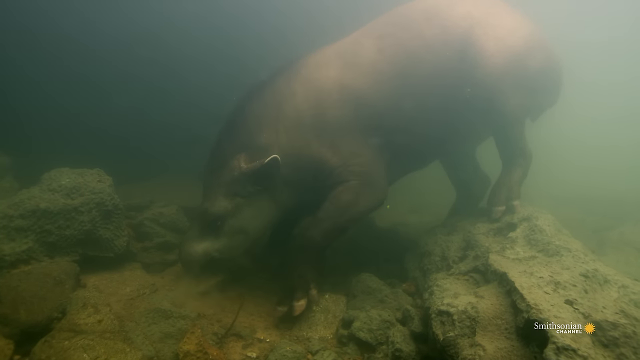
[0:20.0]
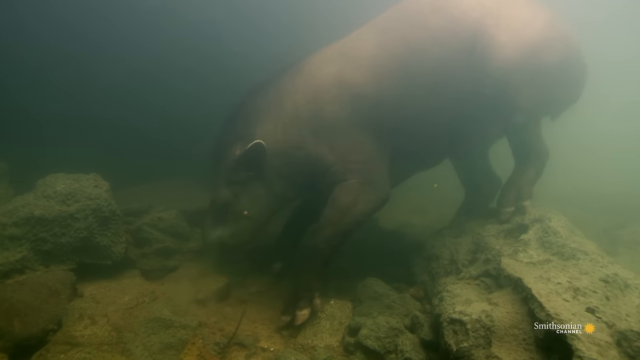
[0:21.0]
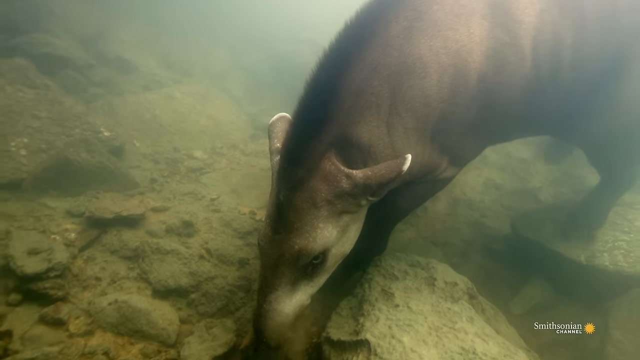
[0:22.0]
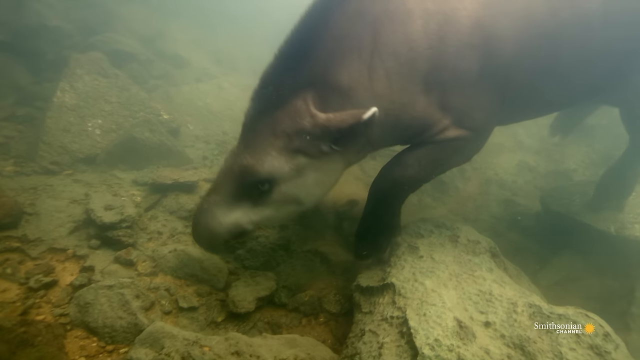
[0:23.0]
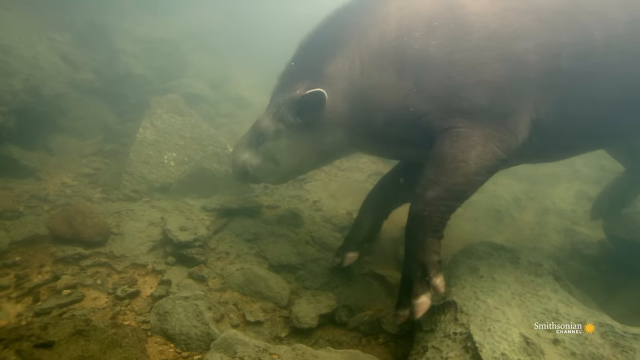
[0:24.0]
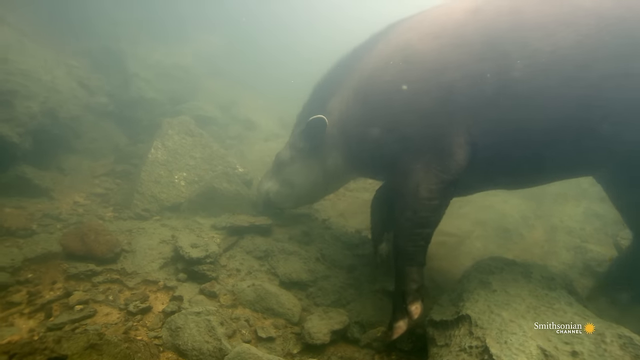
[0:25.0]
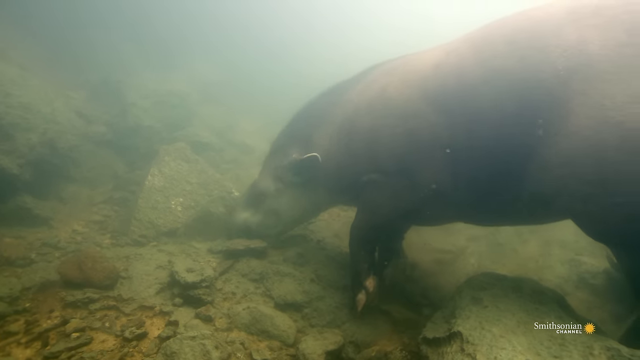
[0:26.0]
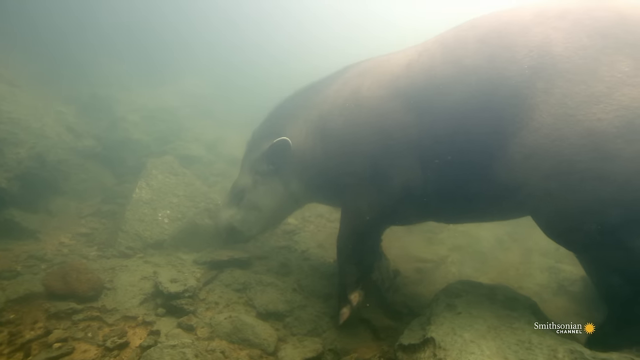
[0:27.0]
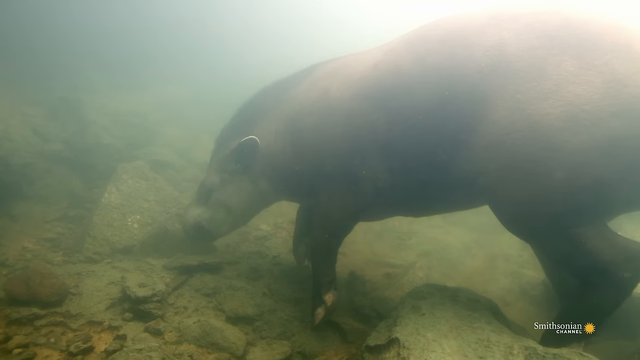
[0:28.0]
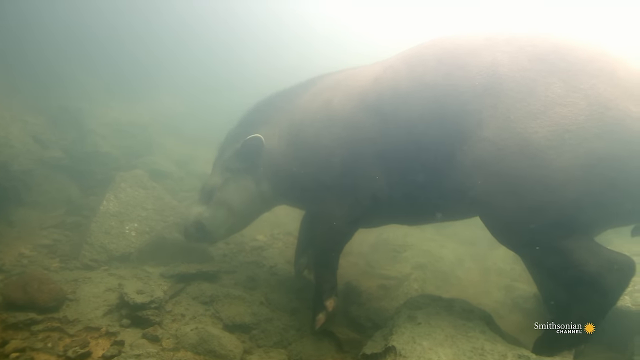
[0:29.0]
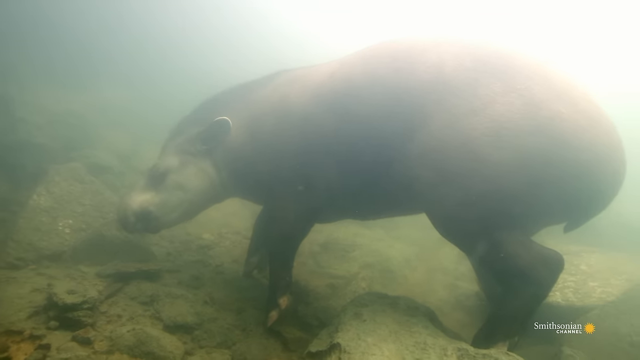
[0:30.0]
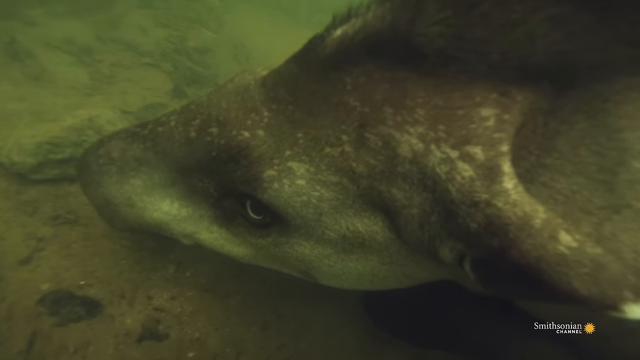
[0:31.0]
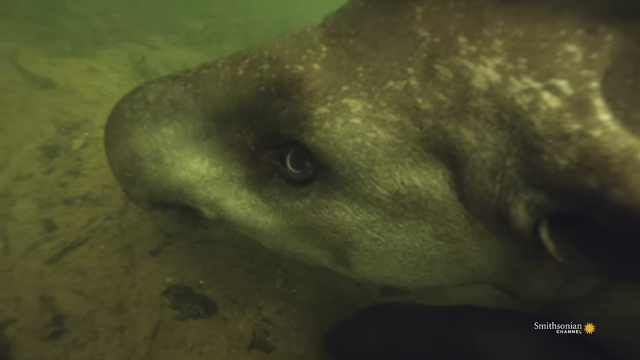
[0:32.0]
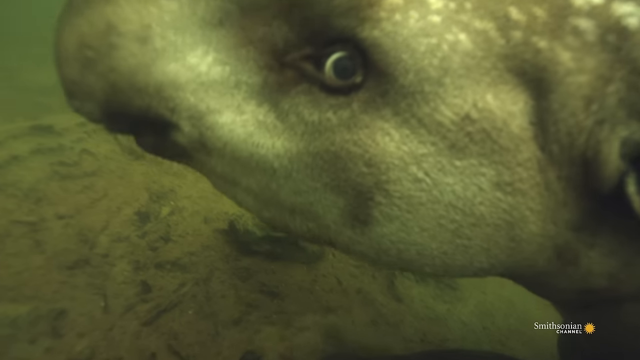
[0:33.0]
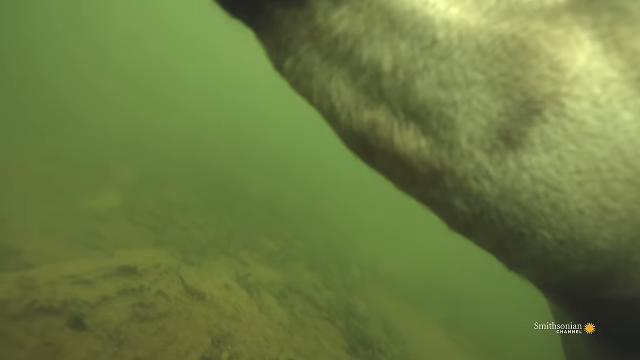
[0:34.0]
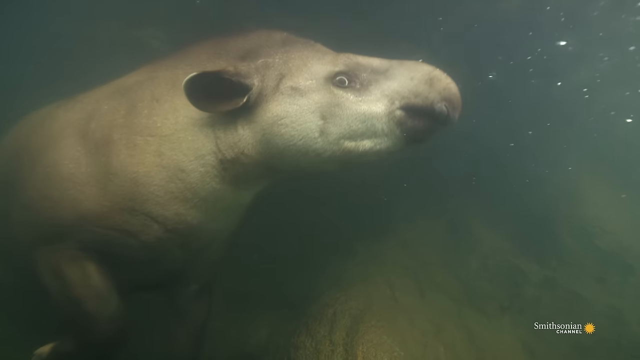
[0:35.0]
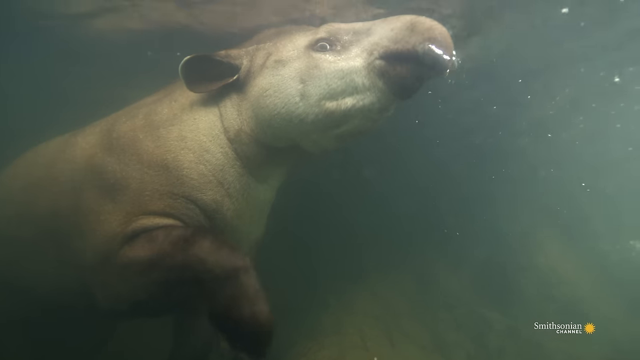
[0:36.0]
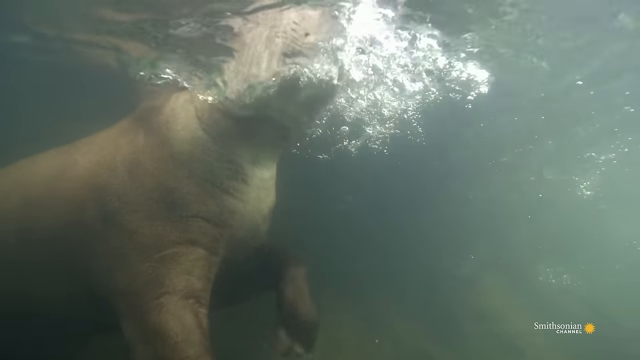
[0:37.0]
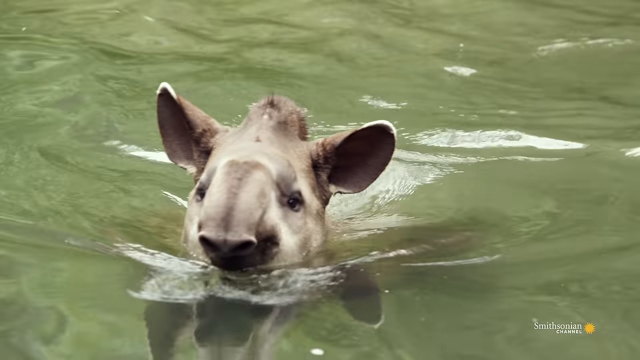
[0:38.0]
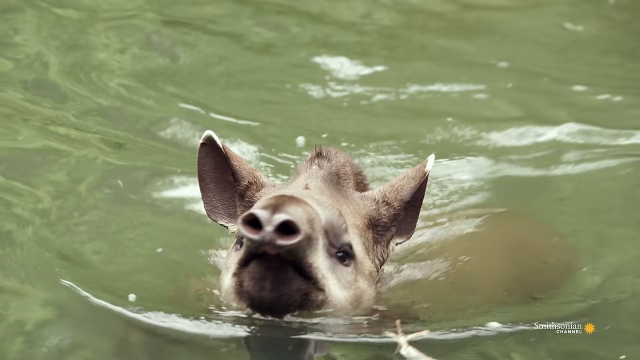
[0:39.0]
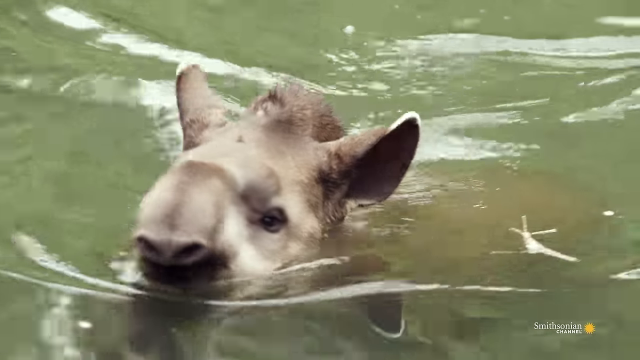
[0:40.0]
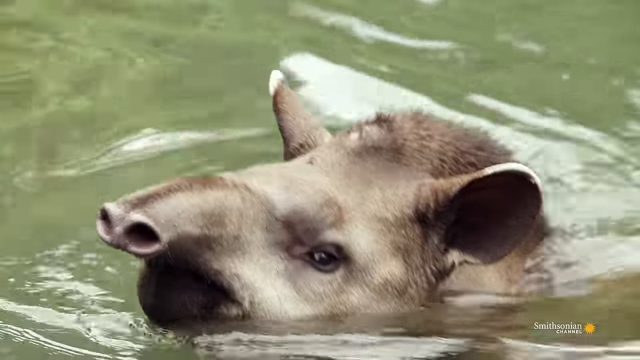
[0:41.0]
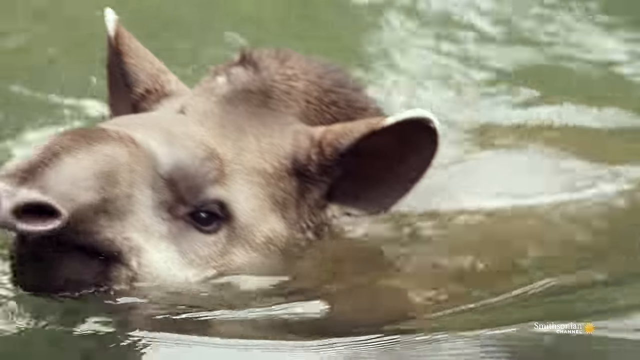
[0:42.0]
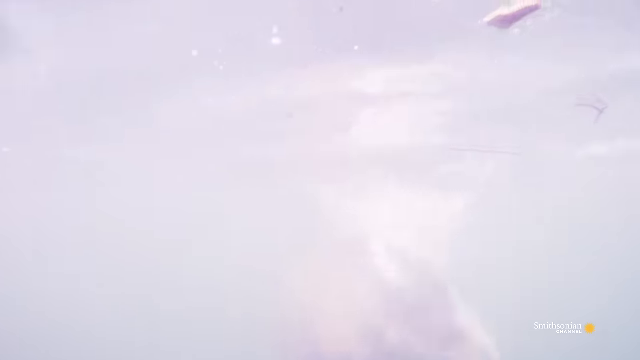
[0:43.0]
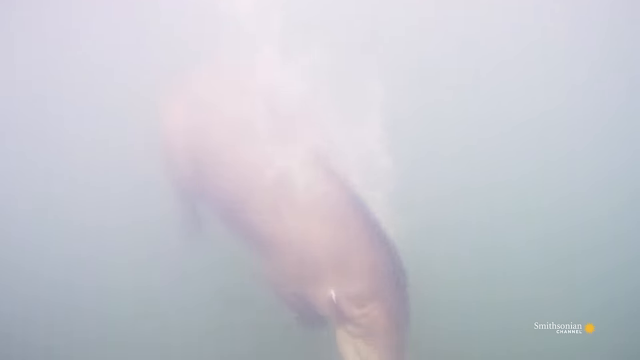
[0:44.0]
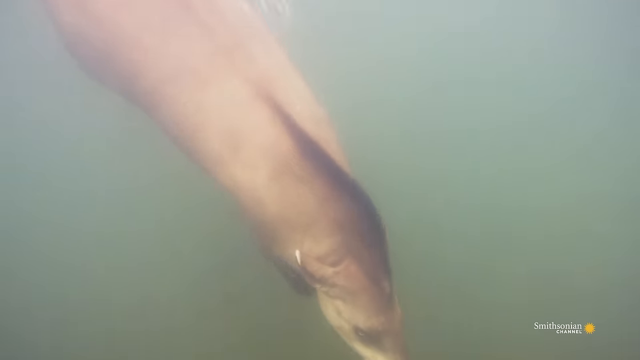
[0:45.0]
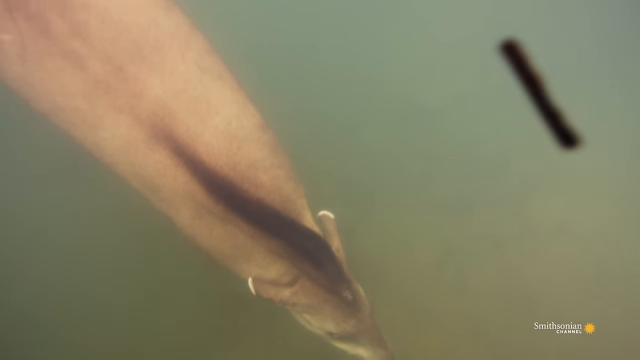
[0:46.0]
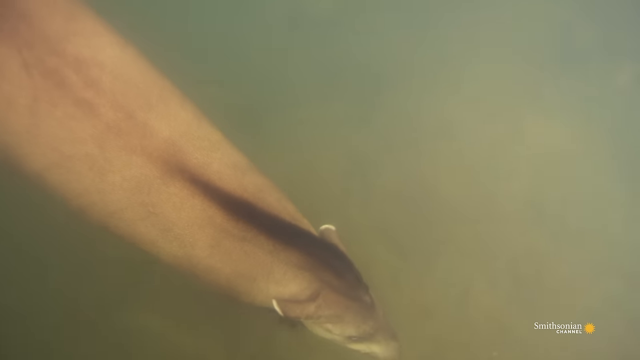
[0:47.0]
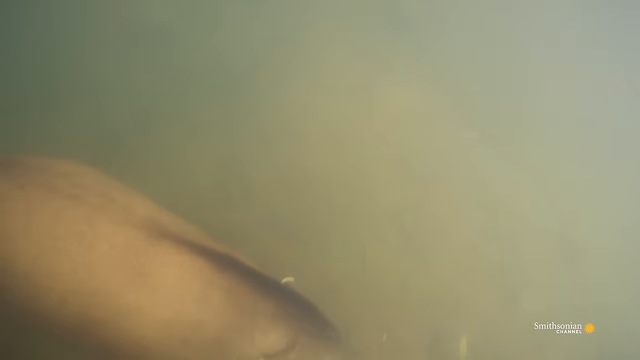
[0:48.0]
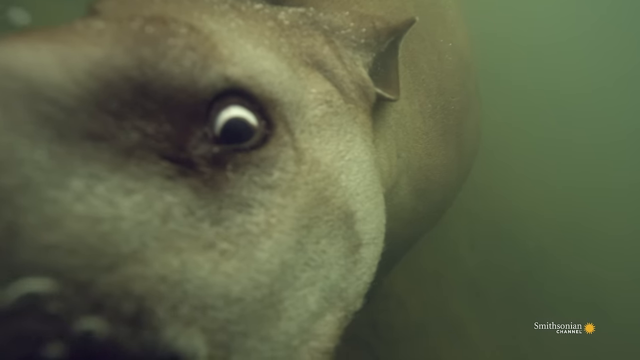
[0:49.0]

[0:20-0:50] The animal is at the bottom of the lake, going through some rocks. From the back it sort of looks like a hippo; from the front it sometimes looks like a rat. Bubbles come from it while it is underwater. It brings its head above the water and pulls out its snout, which has open nostrils, and takes a breath. It has a little mane, like a pony's, on its back. The animal, whose type is uncertain, is a medium brown, and the mane is black. Its feet sort of look like a horse's feet, and its short legs bend in the back a bit, almost like knees. Its ears kind of look like a pig's ears, maybe, but bigger. It seems to be about four feet across and looks kind of heavy, like a cross between an elephant, a rat and a horse.